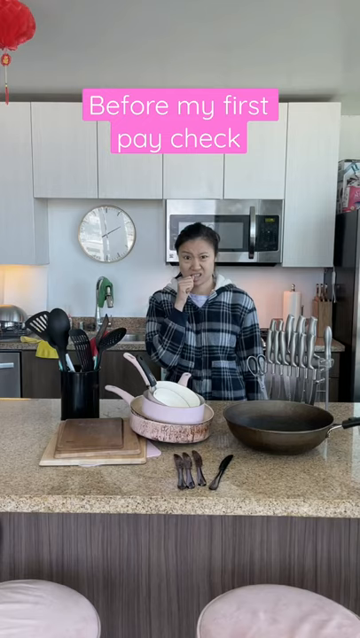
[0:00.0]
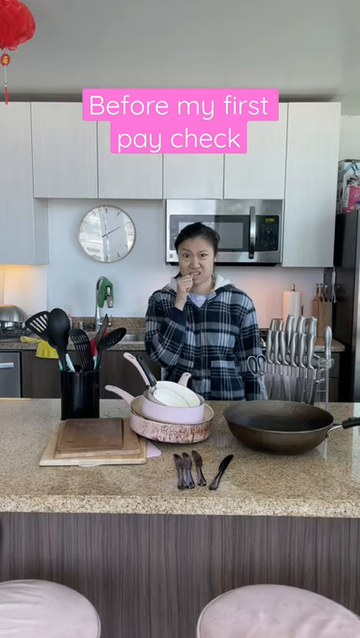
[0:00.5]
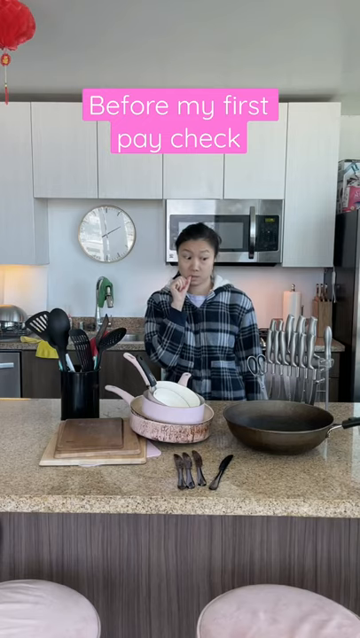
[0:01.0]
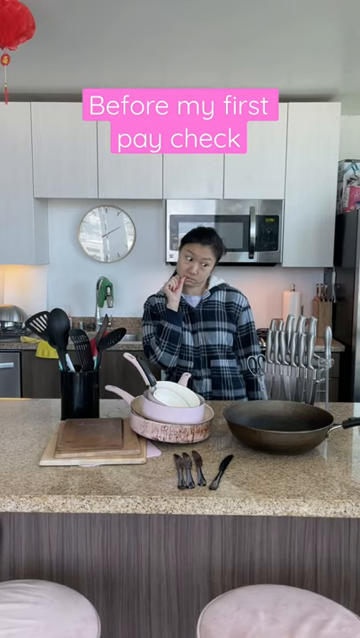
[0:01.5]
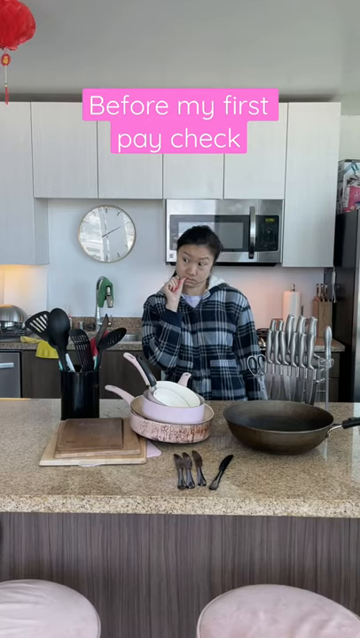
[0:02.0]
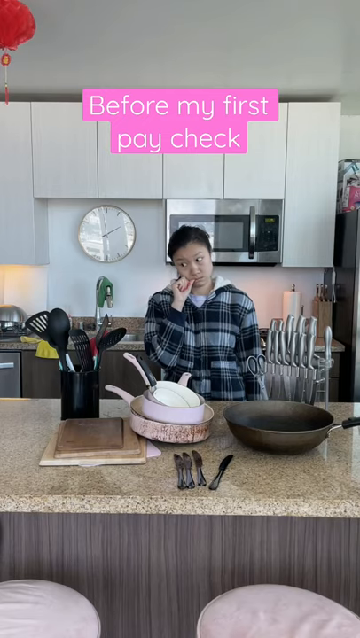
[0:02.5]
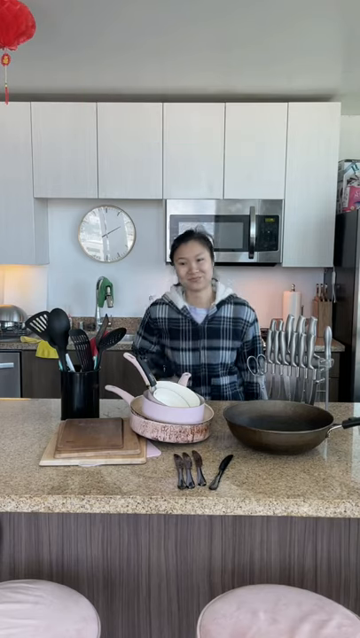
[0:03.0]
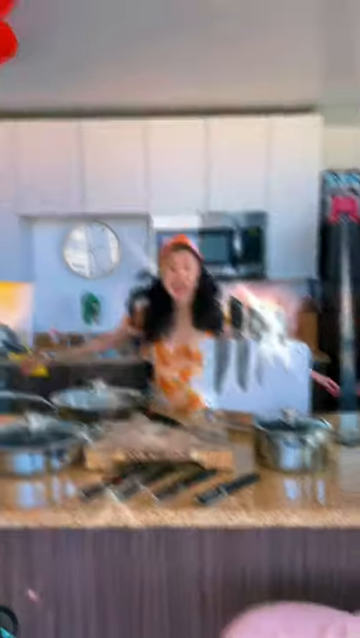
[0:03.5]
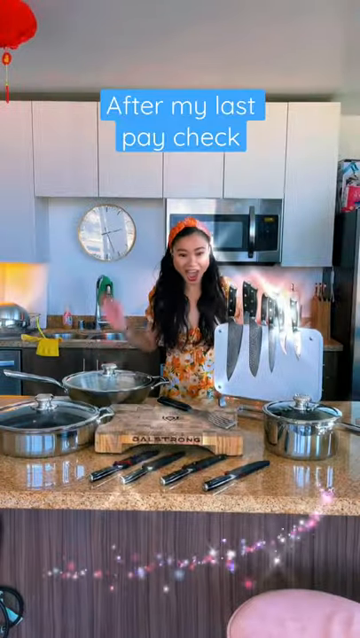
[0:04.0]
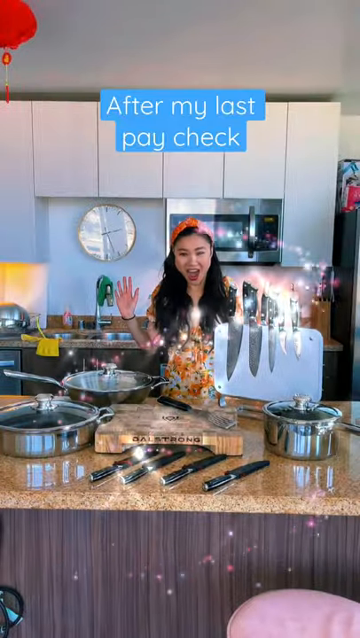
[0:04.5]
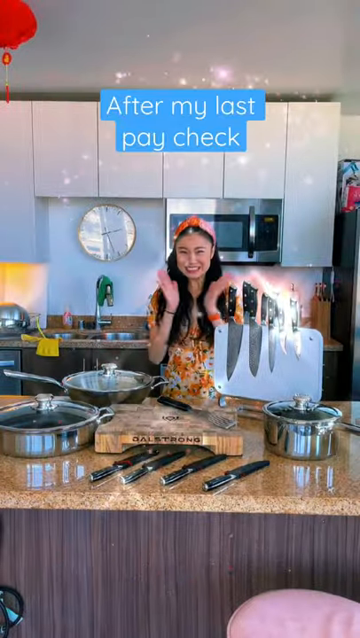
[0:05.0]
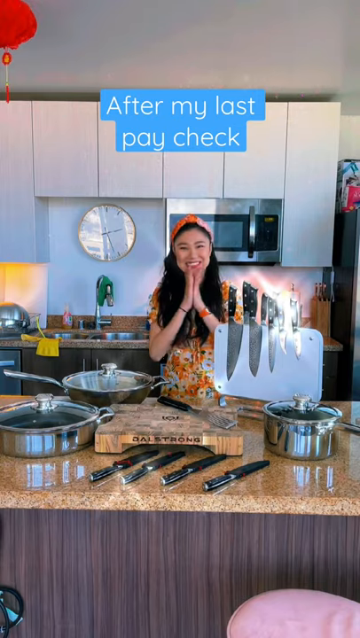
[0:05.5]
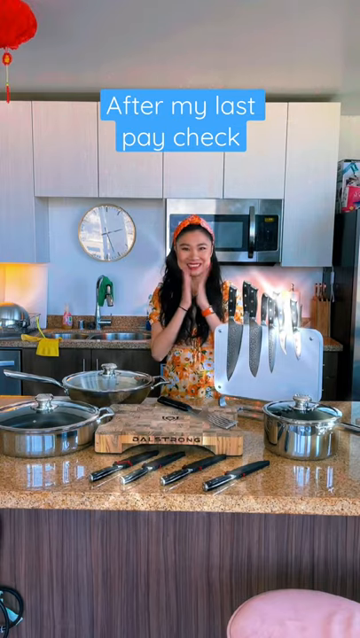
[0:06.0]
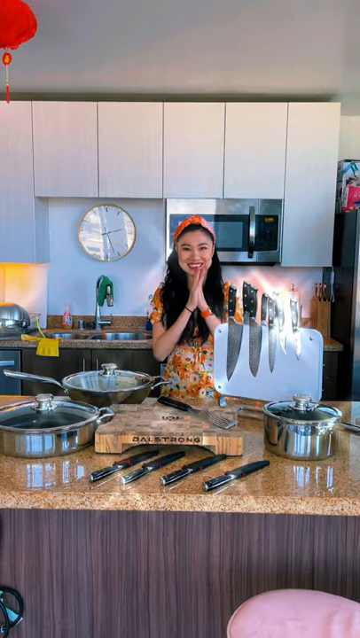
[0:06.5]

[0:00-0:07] A title on the video reads "Guys, I have upgraded my kitchen stuff." The video begins with all of the kitchenware out on the table; these are used and dirty pieces, and the title says "Before my first paycheck." After the latest paycheck, all the kitchen utensils seem to have been upgraded: she has some fresh knives, some fresh pots, and another pair of fresh knives on top of a whiteboard-looking thing. She also has a new wooden cutting board with what looks like a spatula on top. The time in the video seems to be near 4 o'clock, around 3:30. The kitchen seems very busy, with various towels behind on the counter at the kitchen sink and one on top of the faucet. She seems very happy with the choice to upgrade her kitchen stuff.